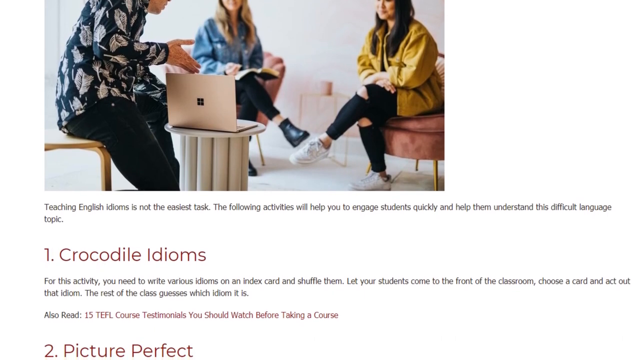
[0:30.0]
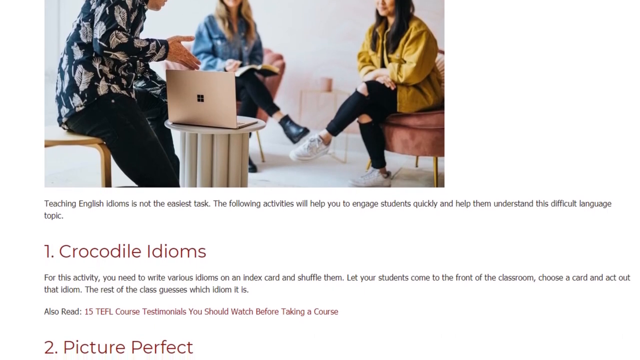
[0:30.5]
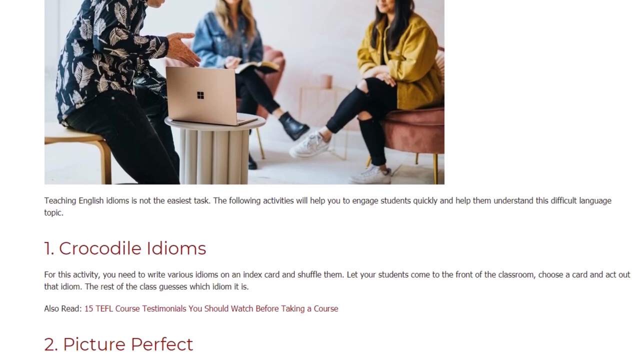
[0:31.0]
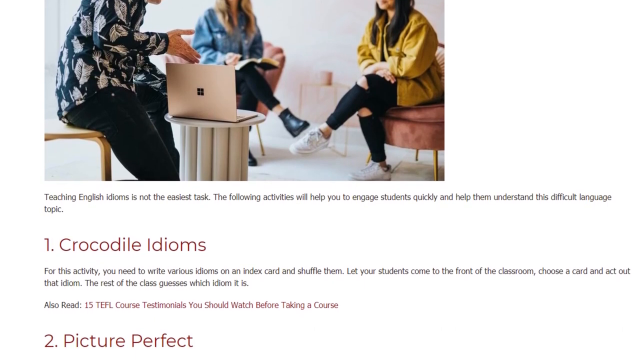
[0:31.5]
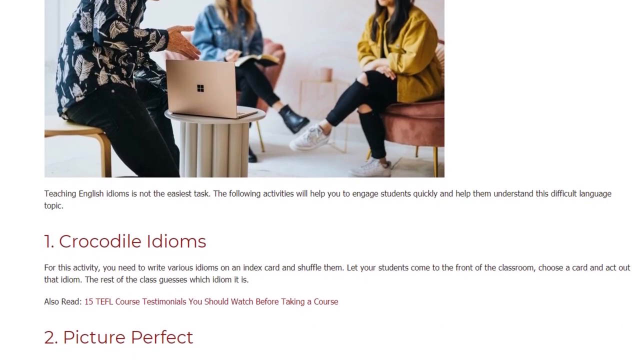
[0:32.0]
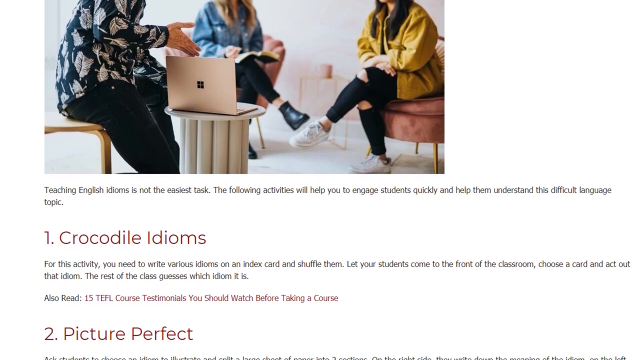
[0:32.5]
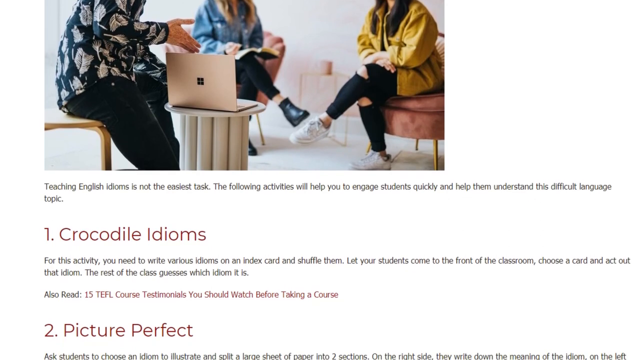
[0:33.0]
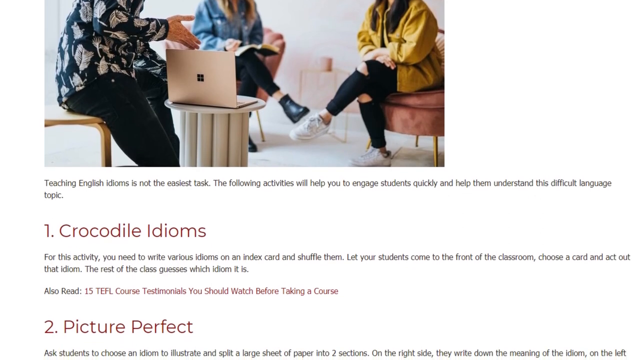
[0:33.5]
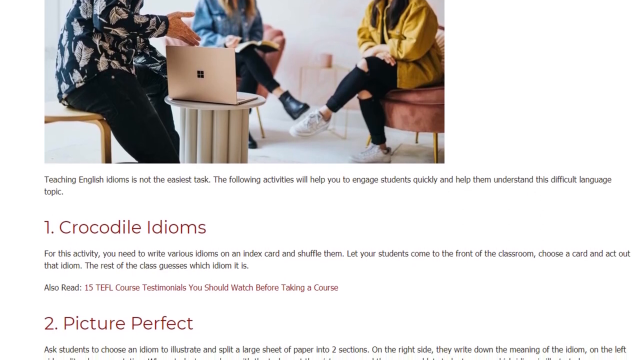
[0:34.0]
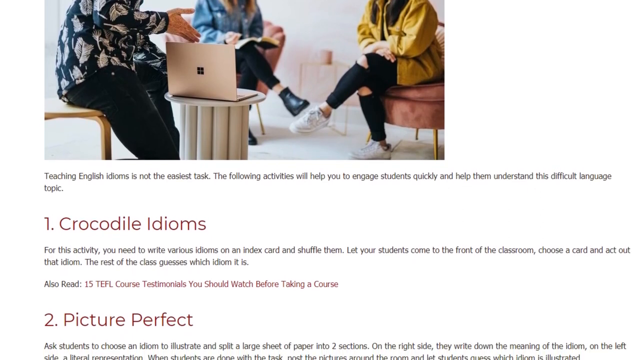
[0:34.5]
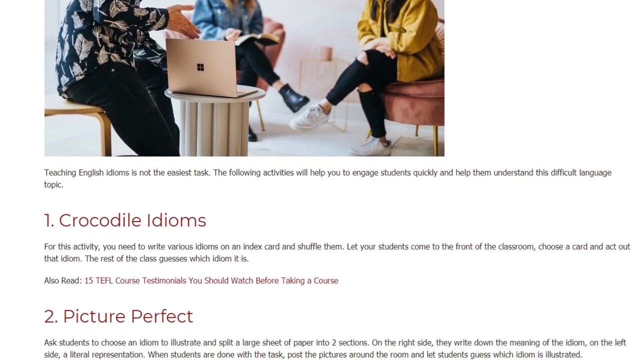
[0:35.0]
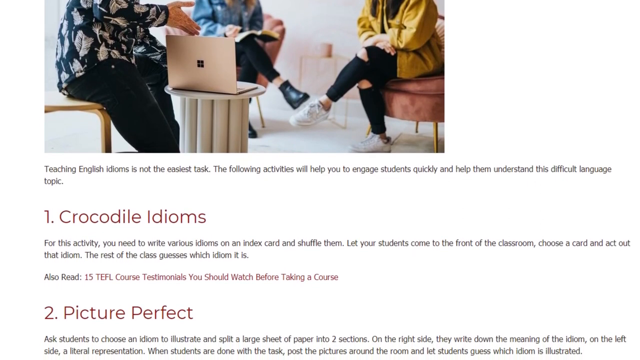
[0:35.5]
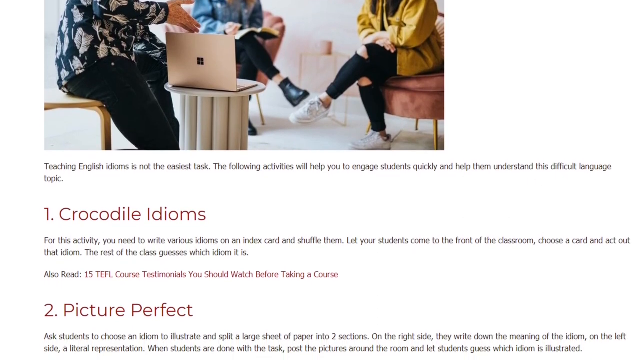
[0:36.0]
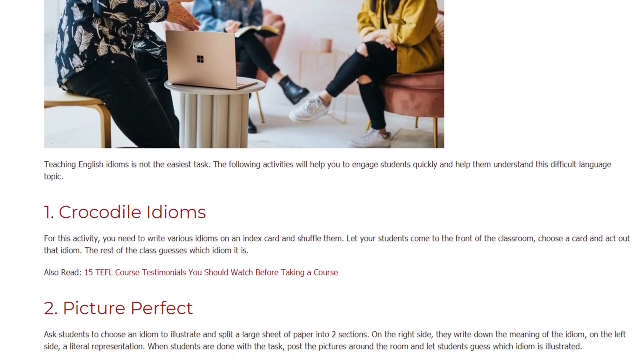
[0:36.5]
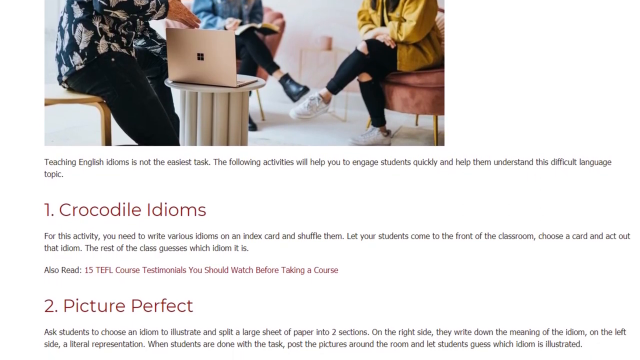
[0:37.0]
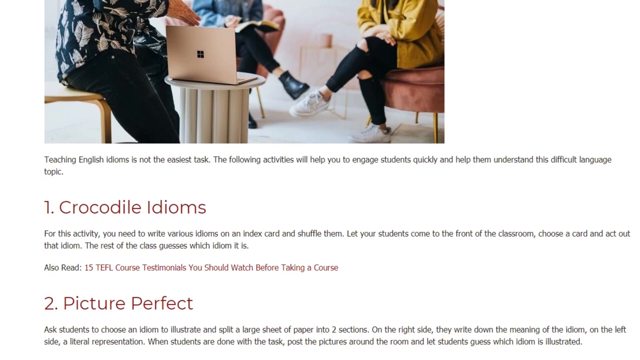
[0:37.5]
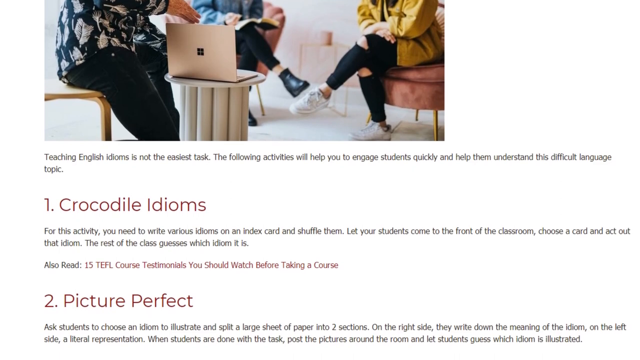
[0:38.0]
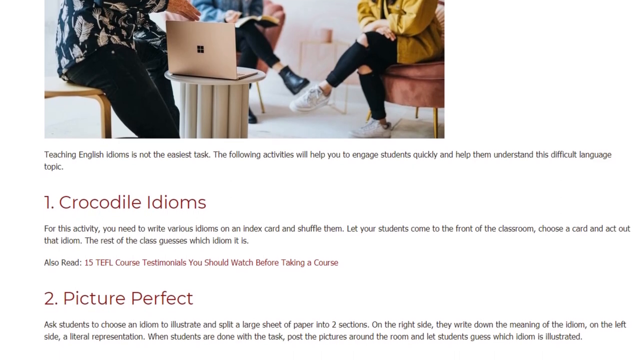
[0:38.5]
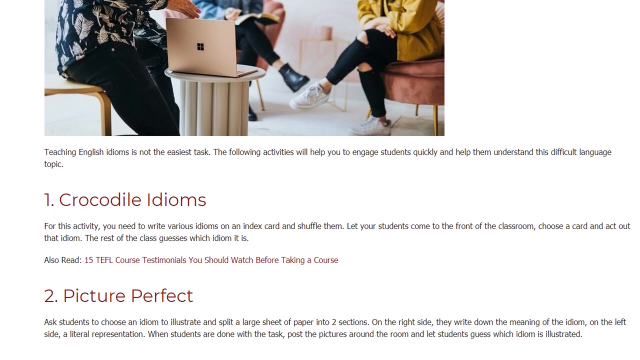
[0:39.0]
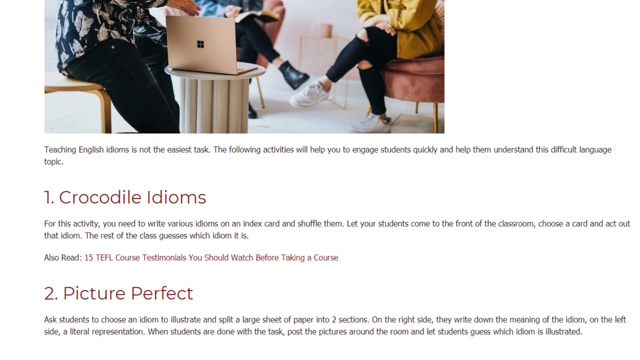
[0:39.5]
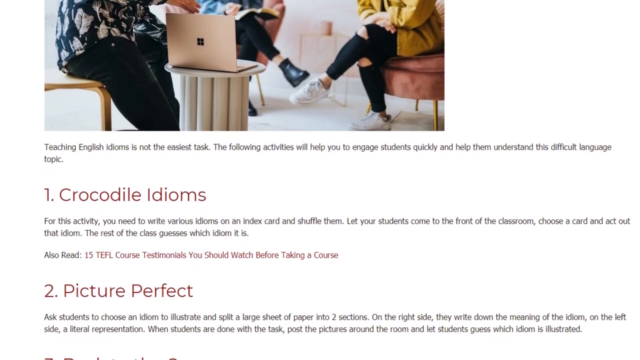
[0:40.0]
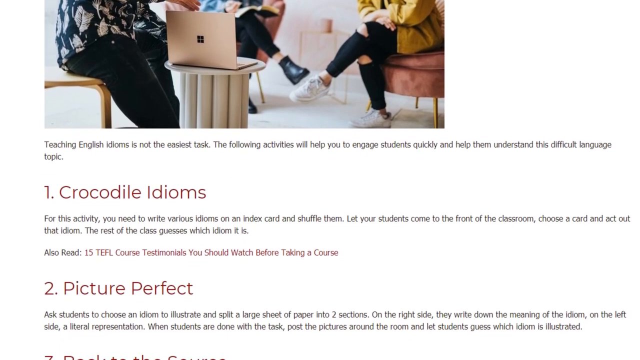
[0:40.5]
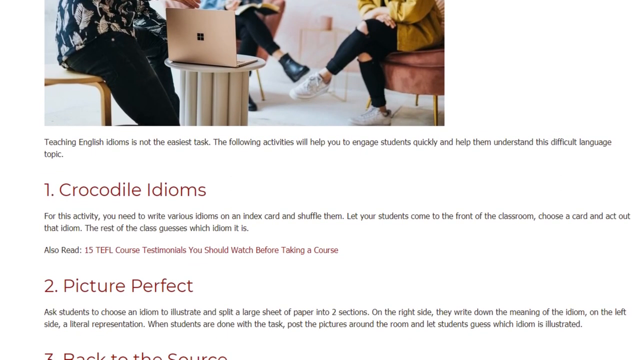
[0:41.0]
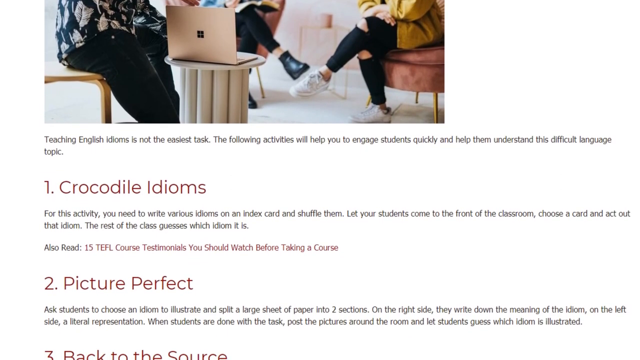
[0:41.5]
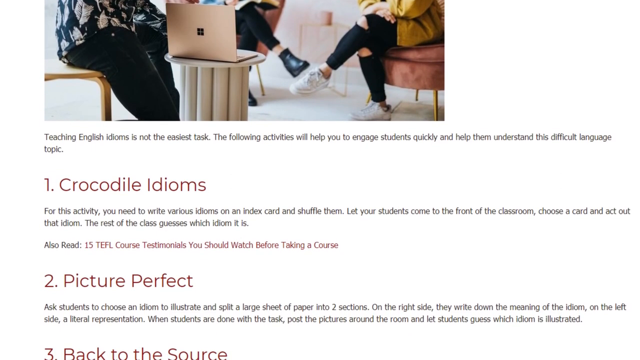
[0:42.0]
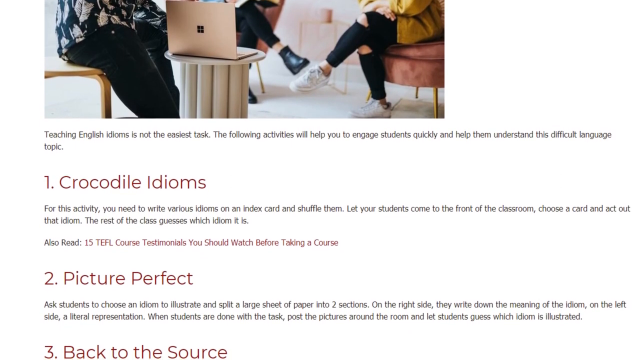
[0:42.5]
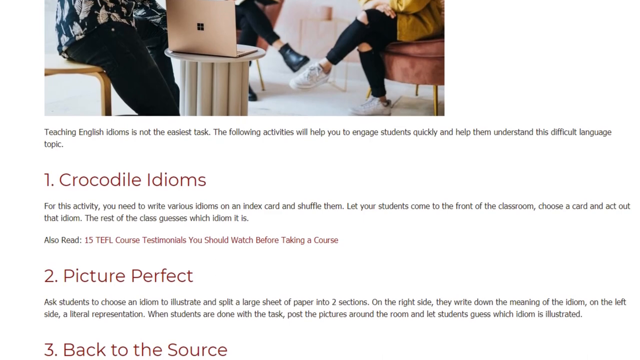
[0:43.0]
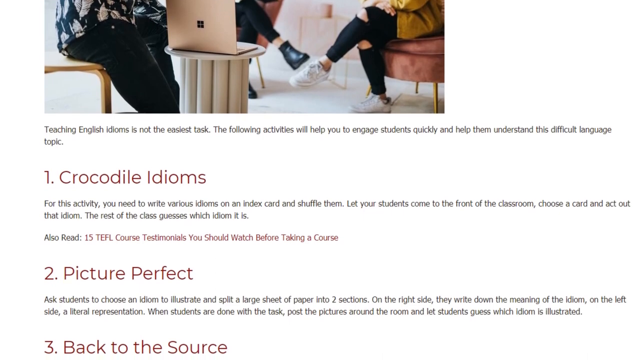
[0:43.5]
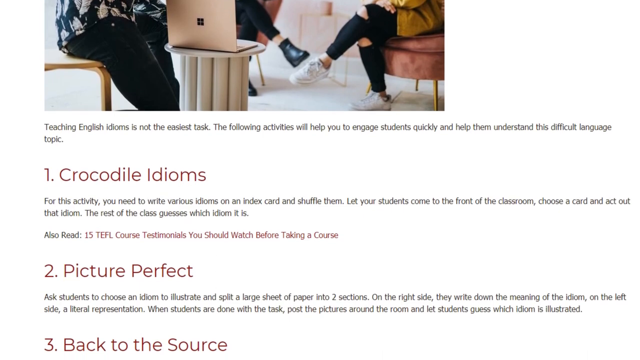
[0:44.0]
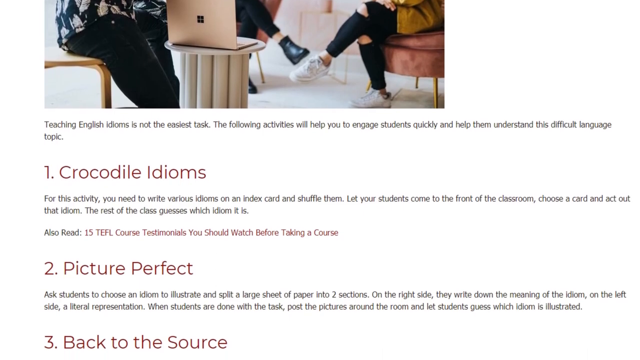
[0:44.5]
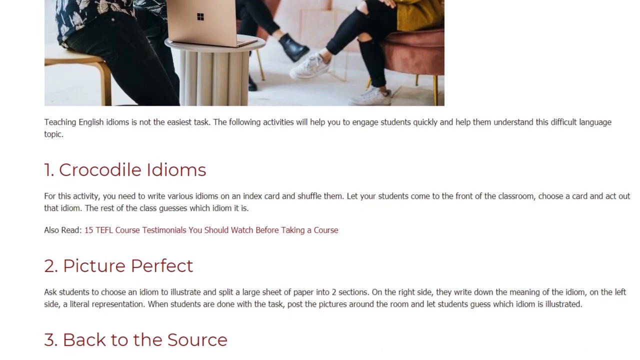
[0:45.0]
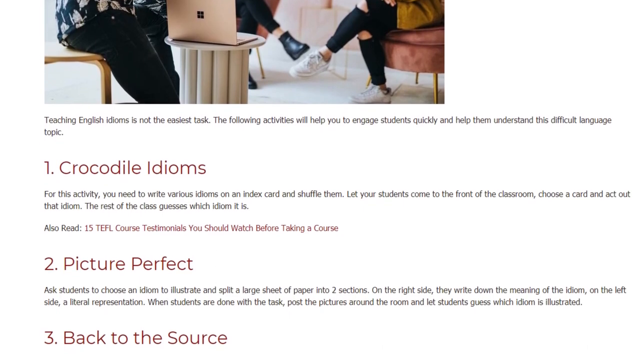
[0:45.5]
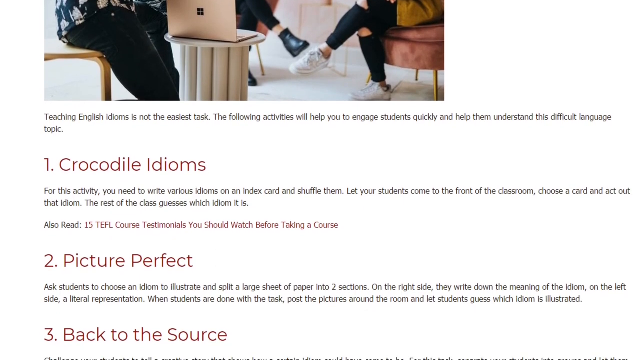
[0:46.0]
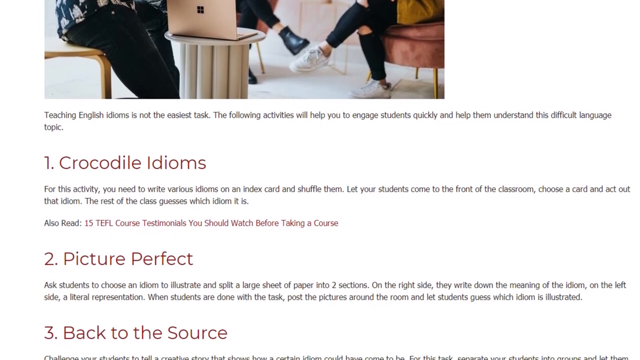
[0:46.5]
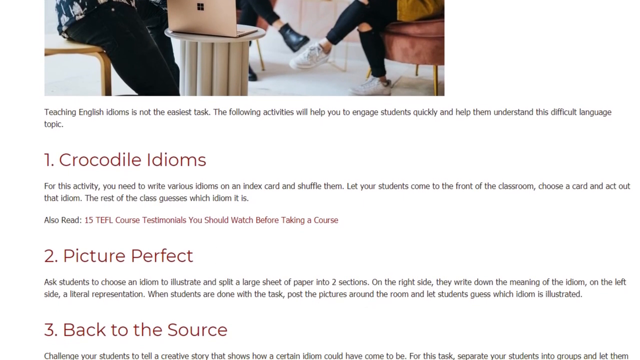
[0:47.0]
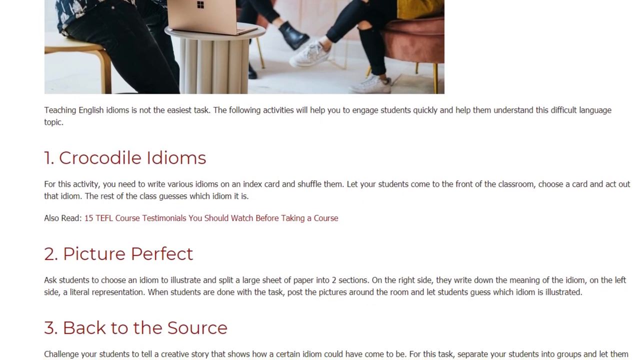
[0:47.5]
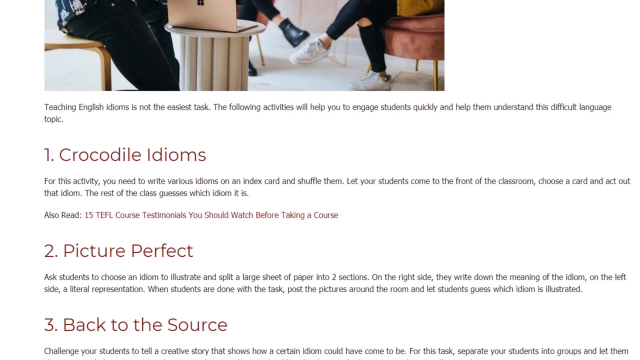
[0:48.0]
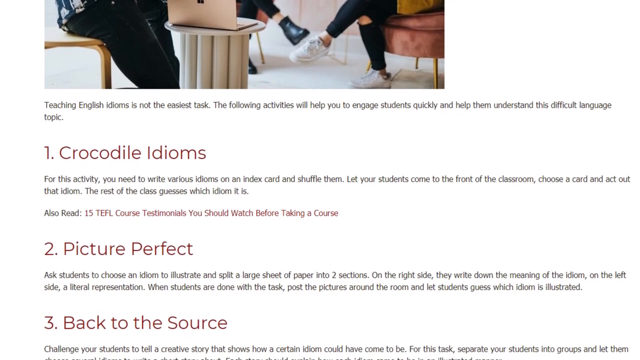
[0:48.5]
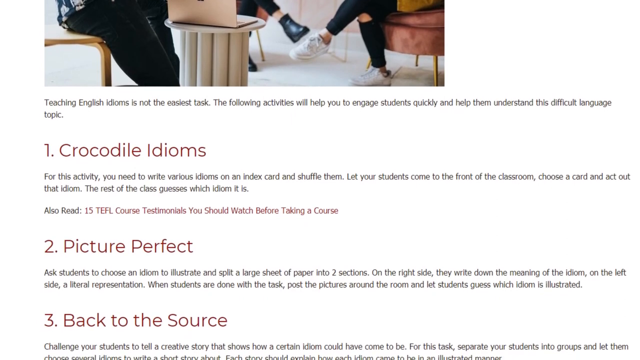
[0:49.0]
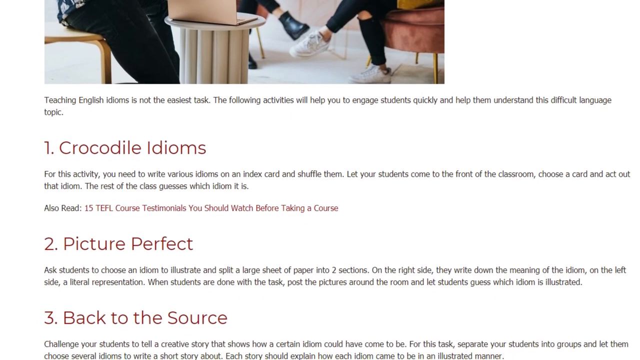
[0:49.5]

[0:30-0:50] The video explains idioms. At the top is a photo of a group of people talking: a male instructor sits on a stool with a laptop in front of him, which he is displaying to two adult students. The adult woman on the right has black hair and the adult woman on the left has blonde hair; both are smiling and paying attention. As the screen scrolls down a list, the text at the bottom reads "teaching idioms" and "Teaching English idioms is not the easiest task. The following activities will help you to engage students quickly and help them understand this difficult language topic." The list starts with number one, "crocodile idioms," followed by directions and a hyperlink. The directions say: "For this activity, you need to write various idioms on an index card and shuffle them. Let your students come to the front of the classroom, choose a card, and act out that idiom. The rest of the class guesses which idiom it is." Below that it says "also read" with a hyperlink. Strategy number two, "picture perfect," comes up, with the text: "Ask students to choose an idiom to illustrate and split a large sheet of paper into two sections. On the right side they write down the meaning of the idiom, on the left side a literal representation. When students are done with the task post the pictures around the room and let students guess which idiom is illustrated."